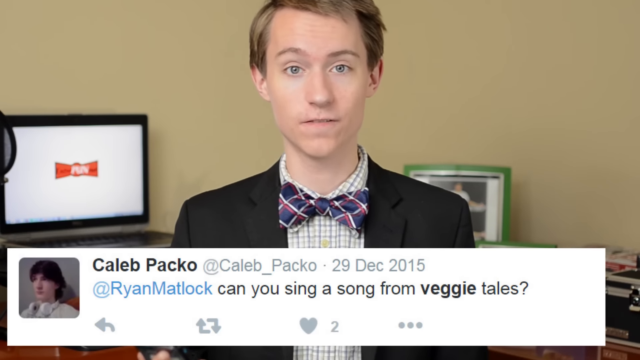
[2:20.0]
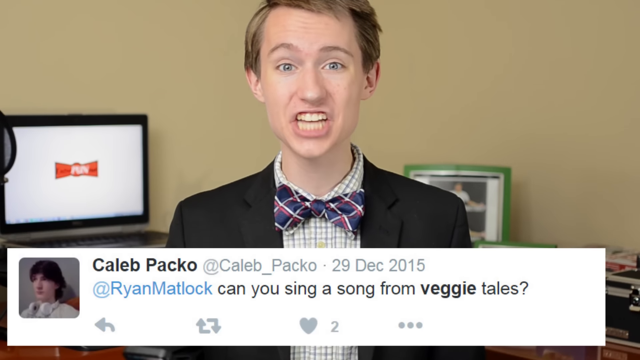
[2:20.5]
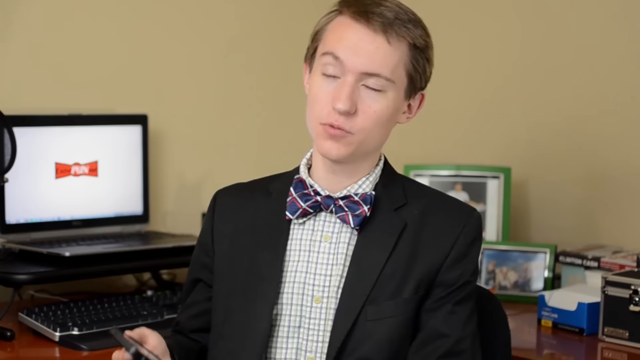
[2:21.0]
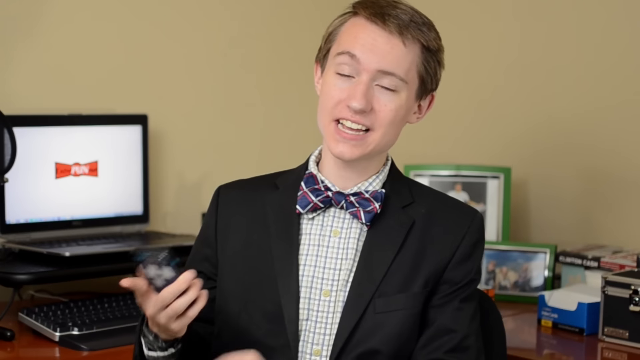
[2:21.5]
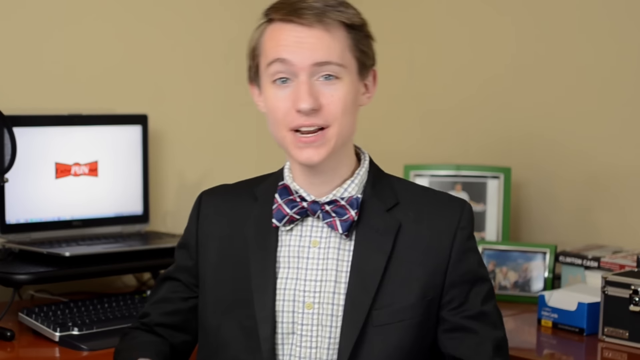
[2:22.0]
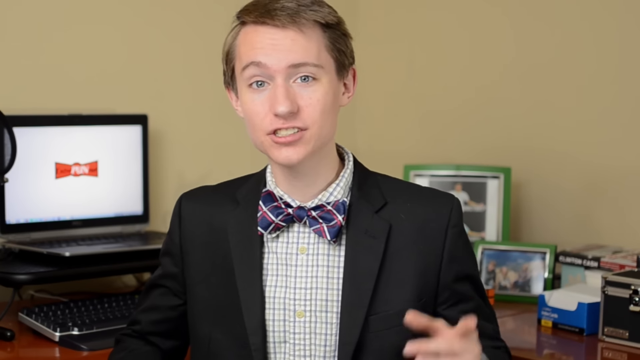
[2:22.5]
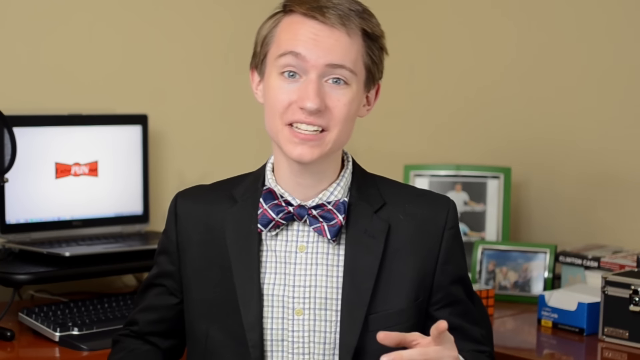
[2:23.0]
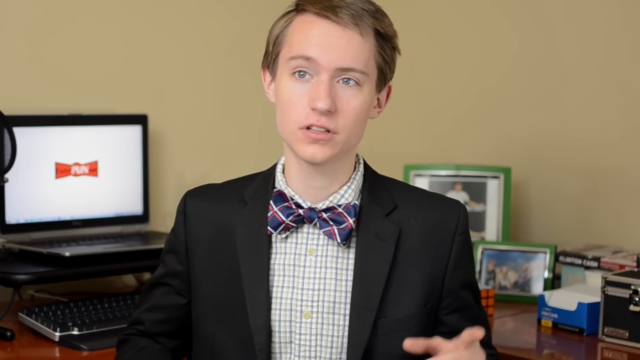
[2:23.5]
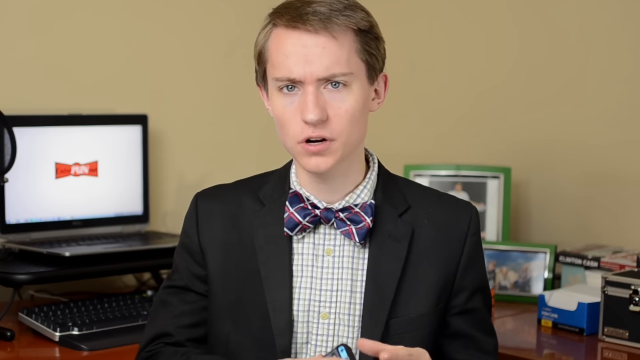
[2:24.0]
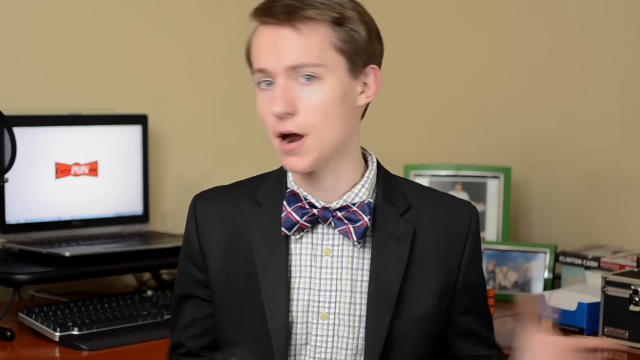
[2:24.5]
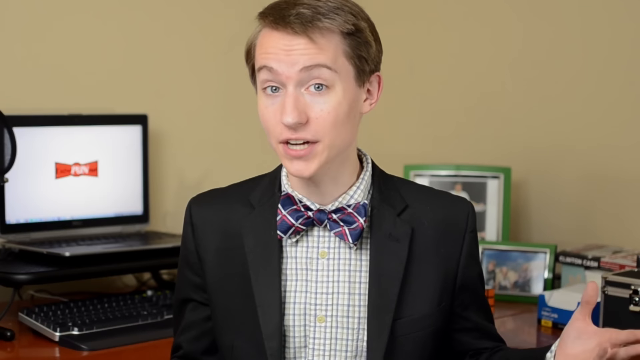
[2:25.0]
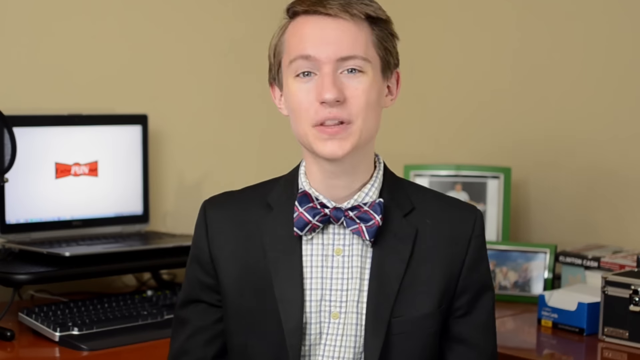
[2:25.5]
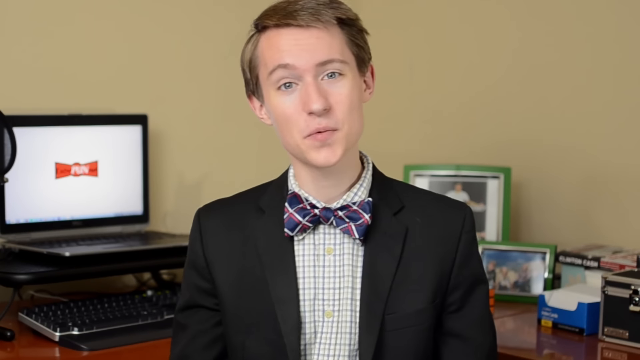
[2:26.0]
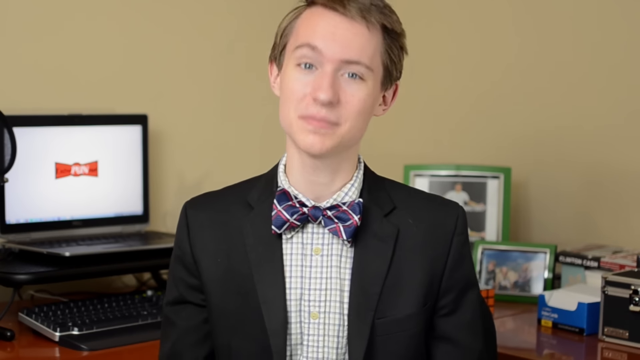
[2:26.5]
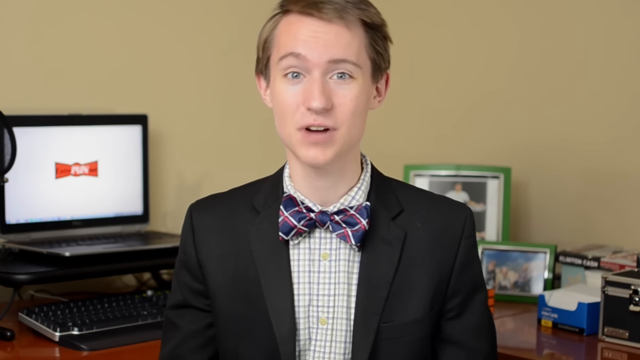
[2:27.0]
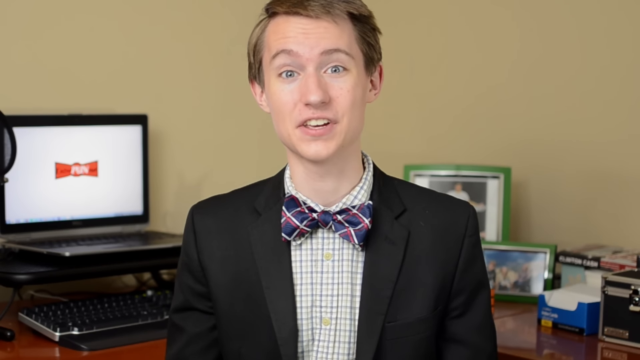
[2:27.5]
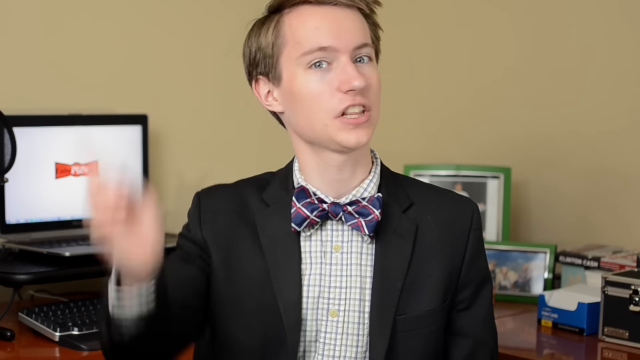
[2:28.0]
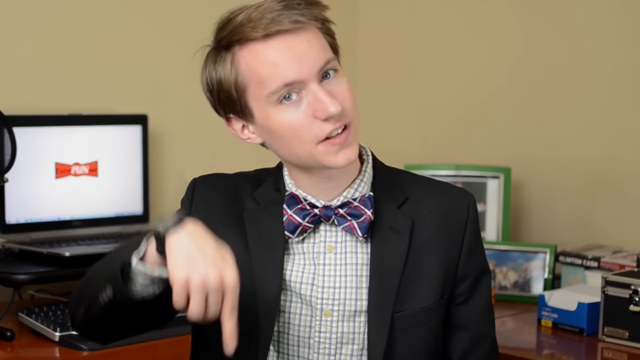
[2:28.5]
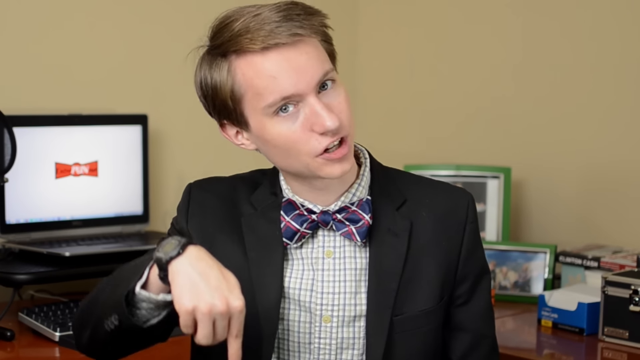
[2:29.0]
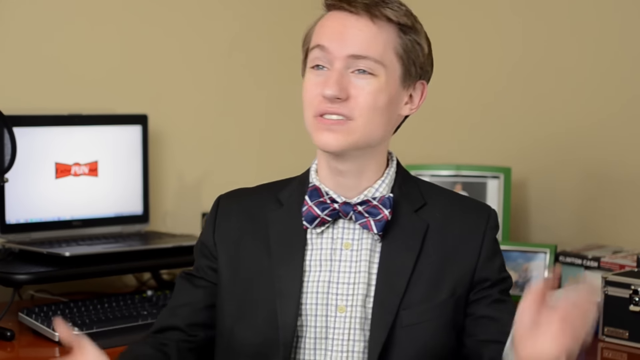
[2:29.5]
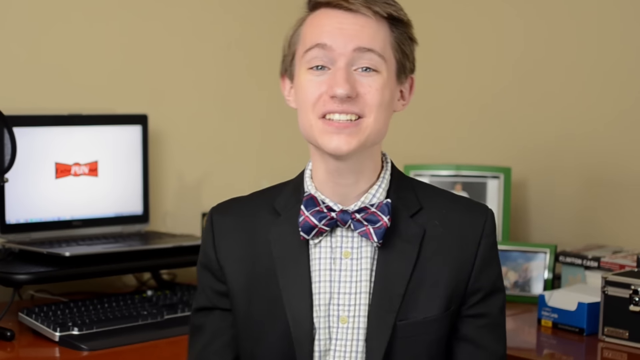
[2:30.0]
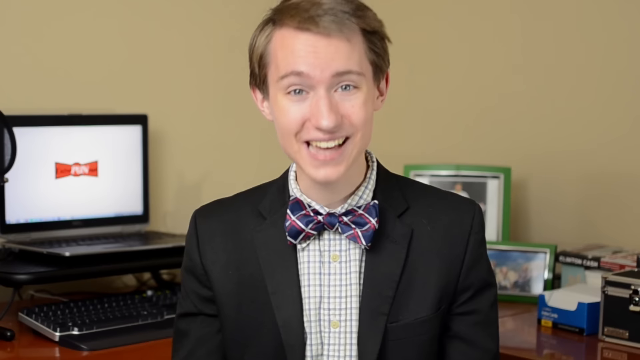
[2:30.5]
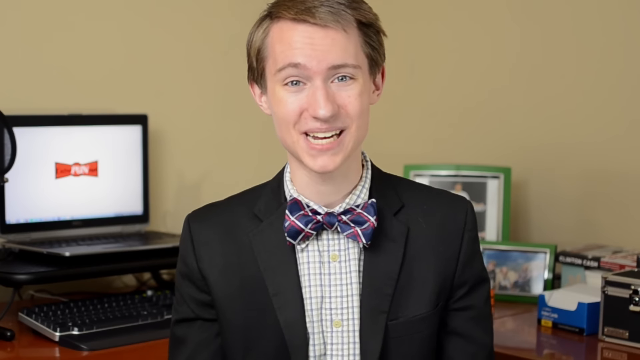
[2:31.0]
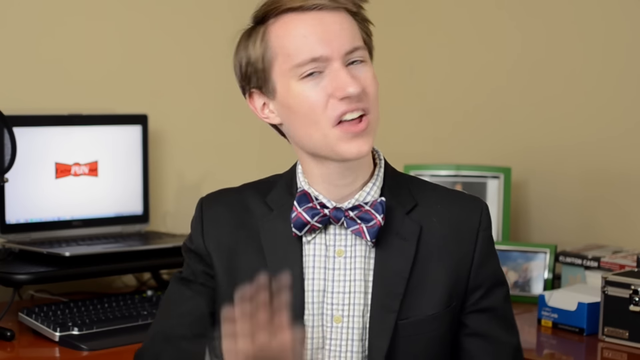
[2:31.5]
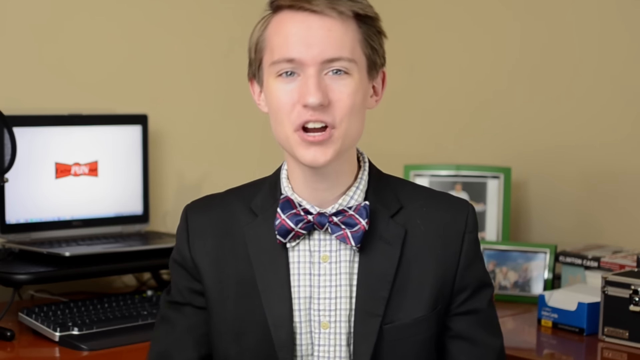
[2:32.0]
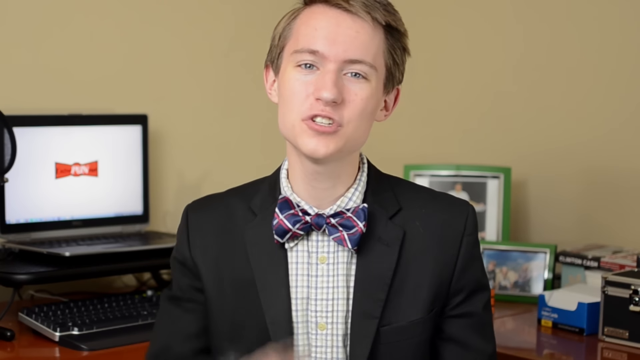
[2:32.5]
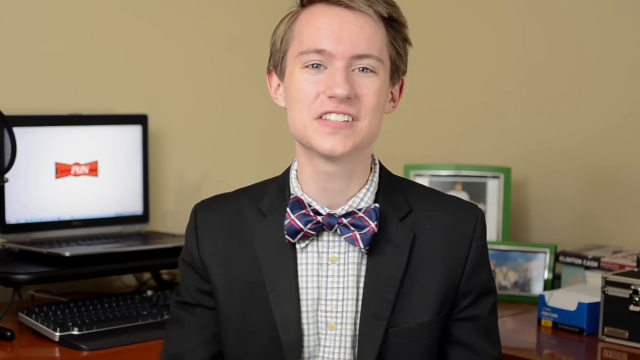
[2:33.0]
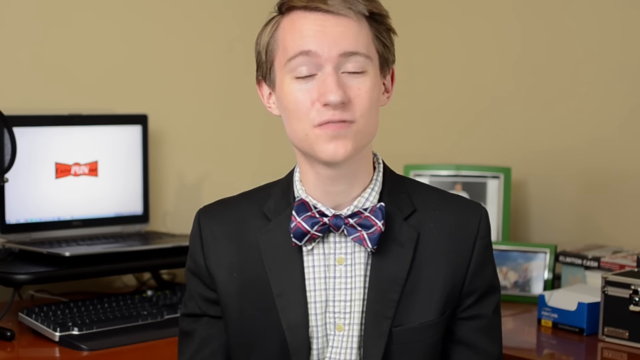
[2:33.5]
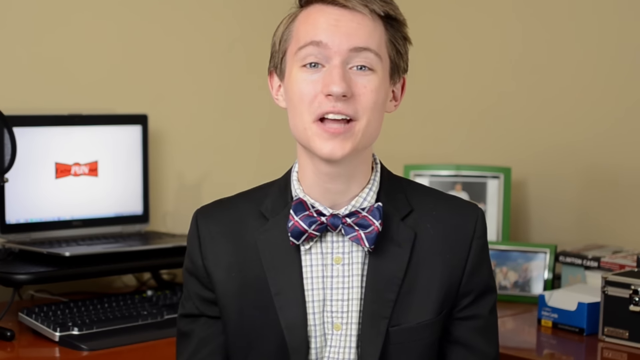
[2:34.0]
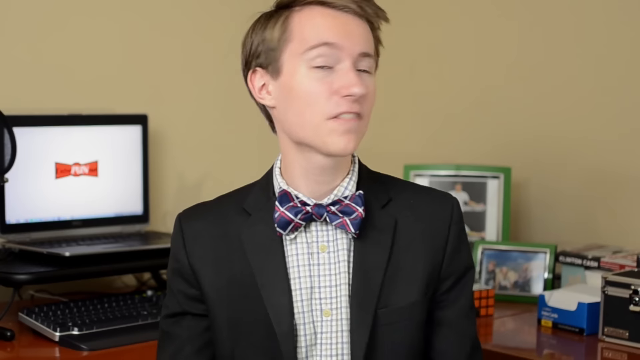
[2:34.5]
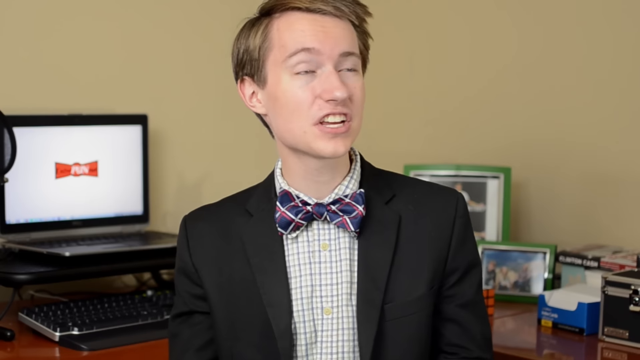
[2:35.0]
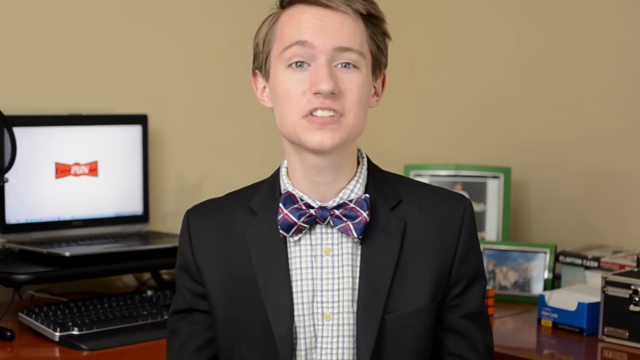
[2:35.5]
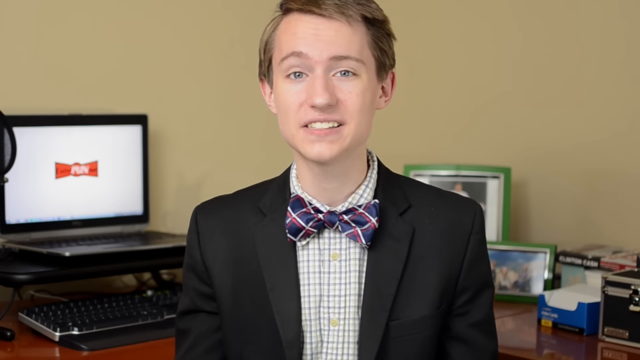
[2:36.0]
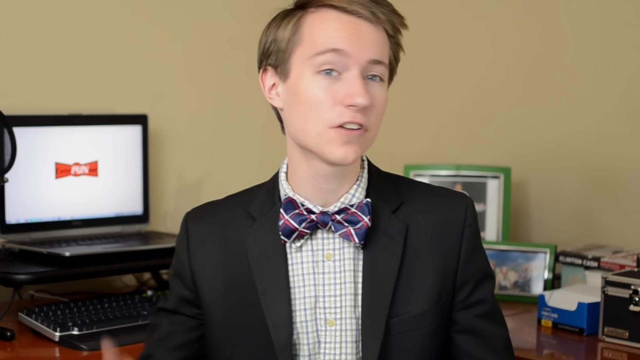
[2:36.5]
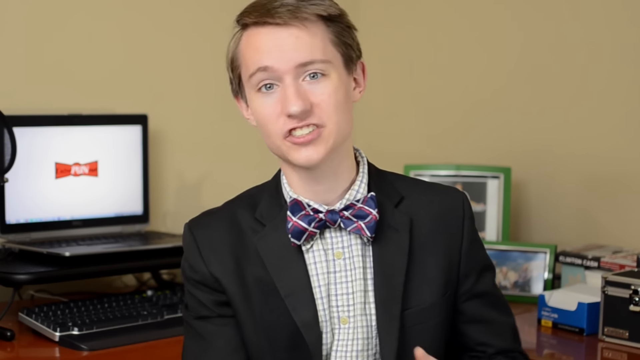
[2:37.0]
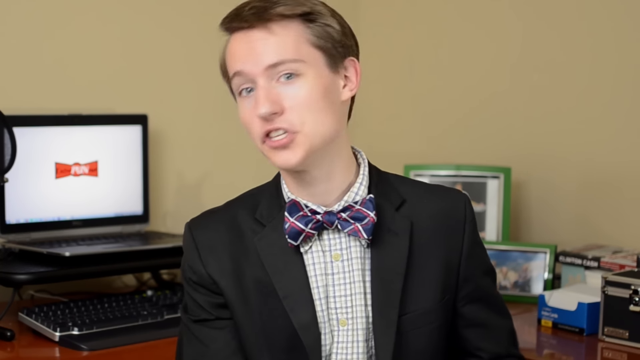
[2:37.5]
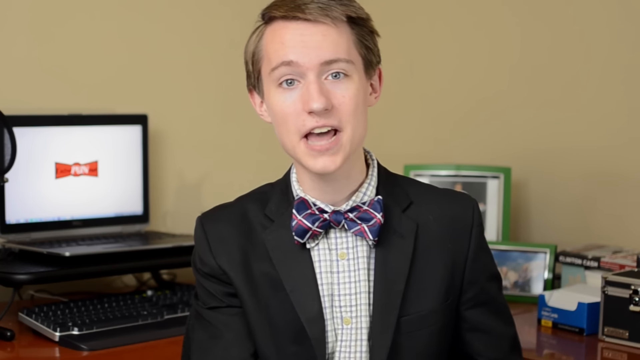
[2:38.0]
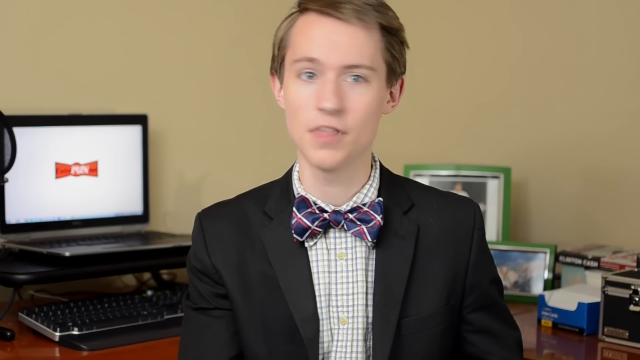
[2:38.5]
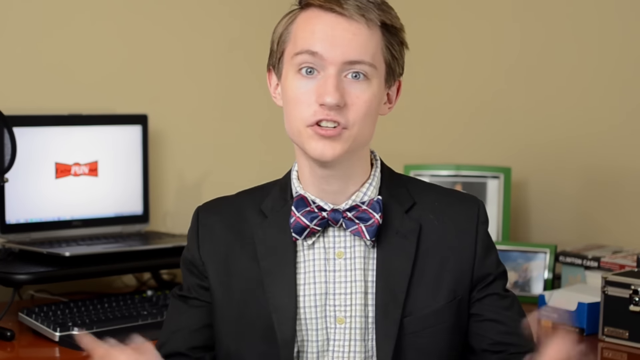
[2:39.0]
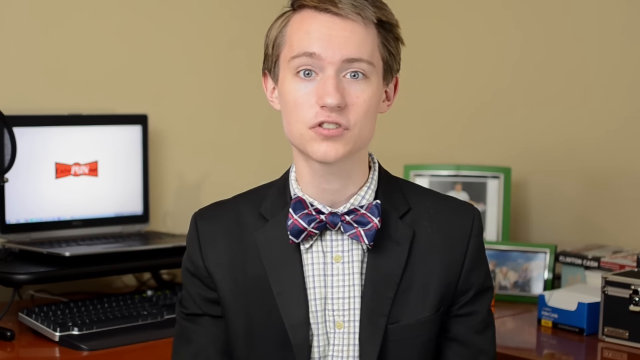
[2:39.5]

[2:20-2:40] In the same bedroom-like setting, the man in the direct middle of the frame is recording what is apparently a kind of selfie video, answering questions. He has a white skin tone and short brown hair combed to the side, and wears a black suit jacket, a white dress shirt with gray stripes, and a dark blue bow tie with red and white stripes. The same white rectangle at the bottom holds a tweet with the name Caleb Packo at the top left and the message "can you sing a song from VeggieTales?" The tweet disappears. Looking directly at the camera, he slightly raises his right hand, then kind of moves both hands up in front of him and out to his sides, open-palmed. Nodding his head very slightly, he raises his right hand with his pointer finger up, then drops the finger down; he is wearing a black watch. He raises his hand again and very quickly makes a peace sign with the pointer and middle fingers of his right hand before dropping it off camera. He finishes with a sort of chopping hand movement with his right hand.